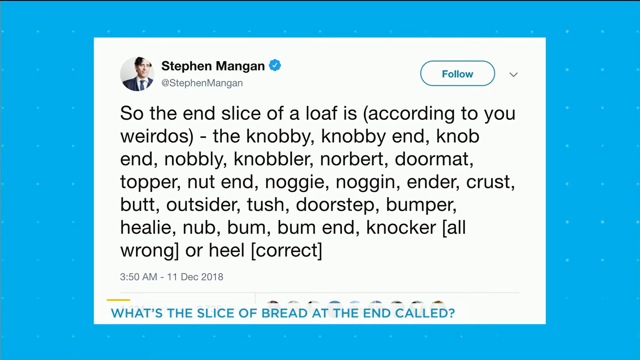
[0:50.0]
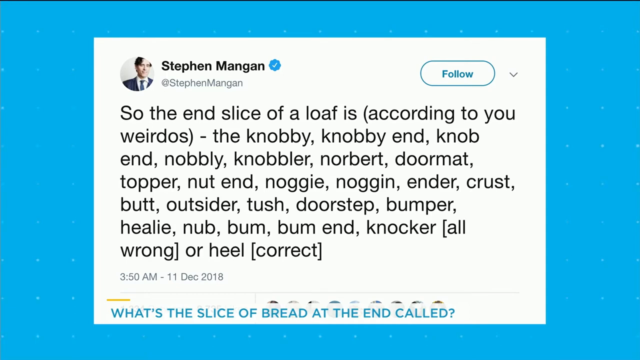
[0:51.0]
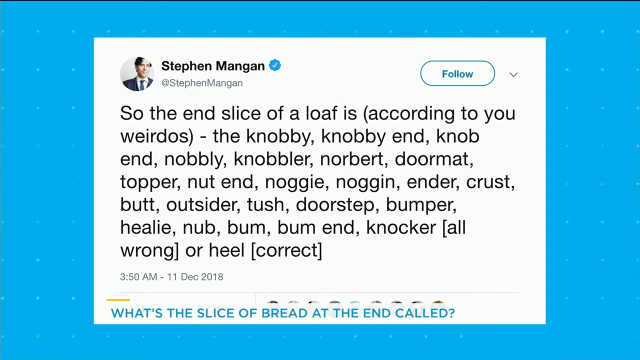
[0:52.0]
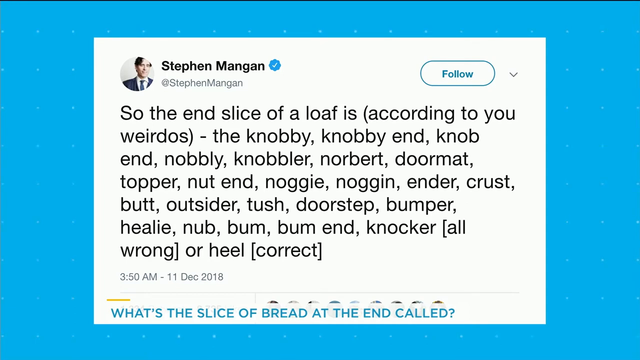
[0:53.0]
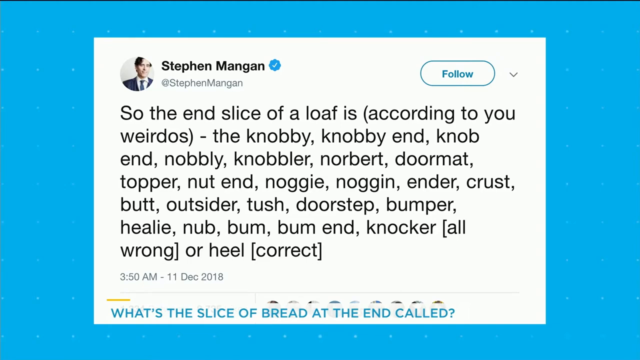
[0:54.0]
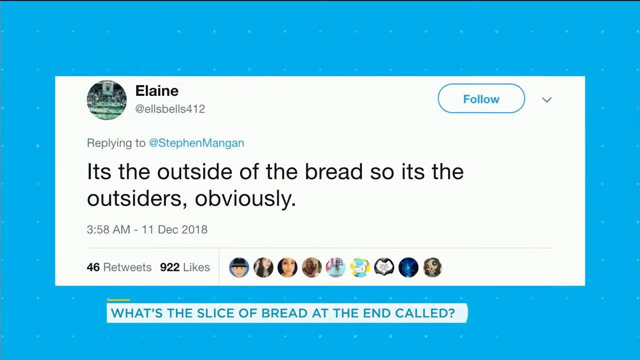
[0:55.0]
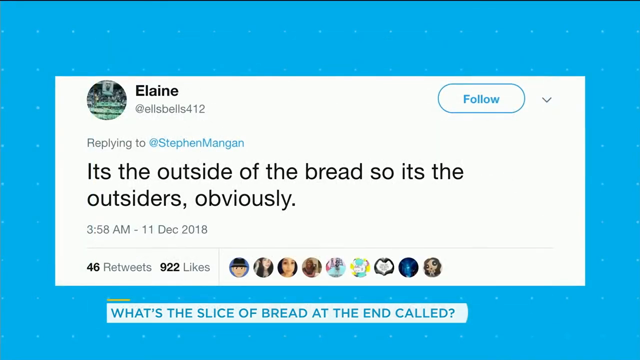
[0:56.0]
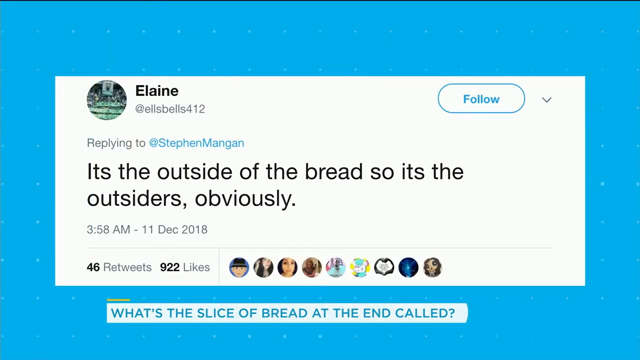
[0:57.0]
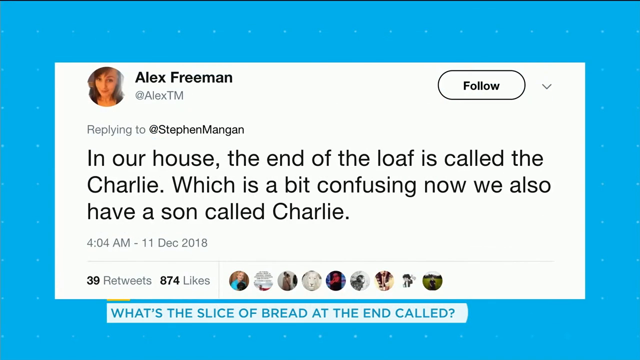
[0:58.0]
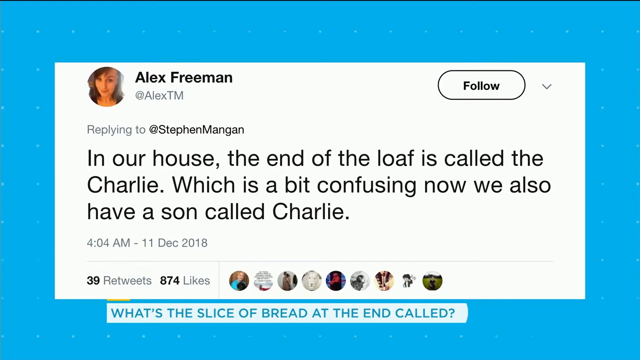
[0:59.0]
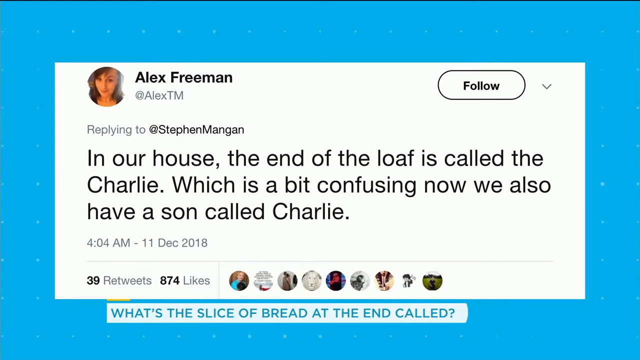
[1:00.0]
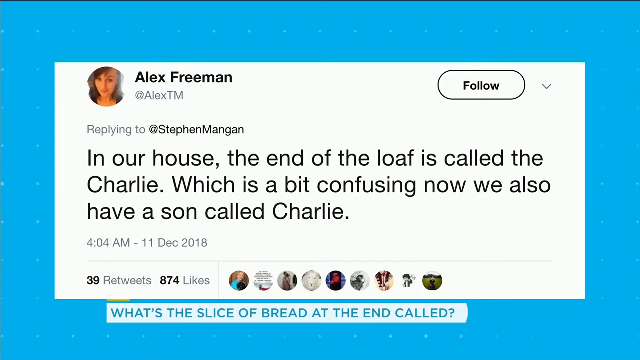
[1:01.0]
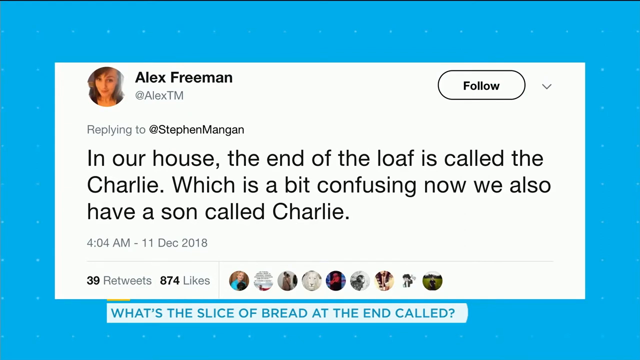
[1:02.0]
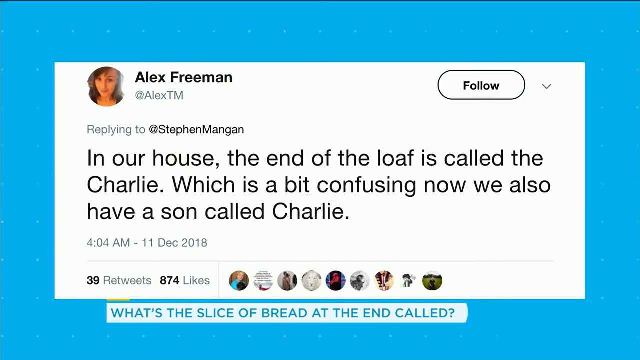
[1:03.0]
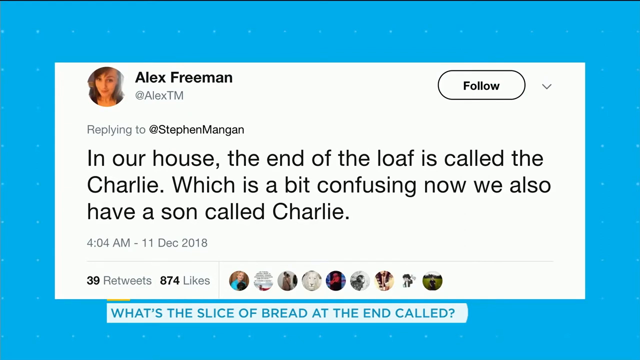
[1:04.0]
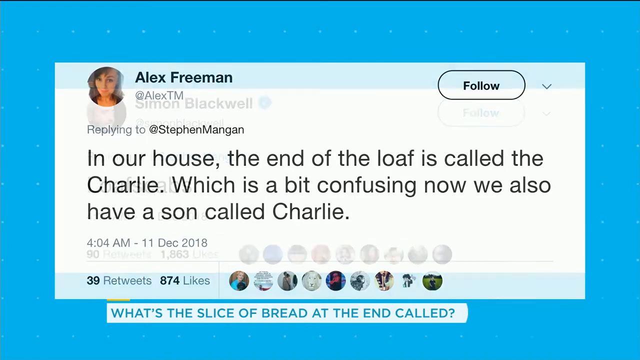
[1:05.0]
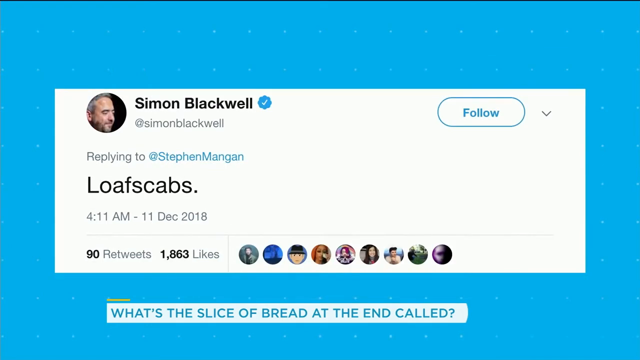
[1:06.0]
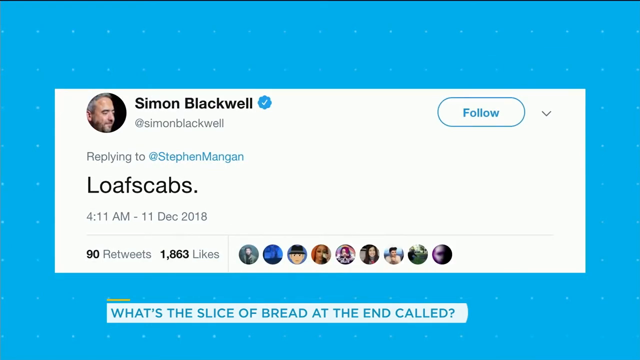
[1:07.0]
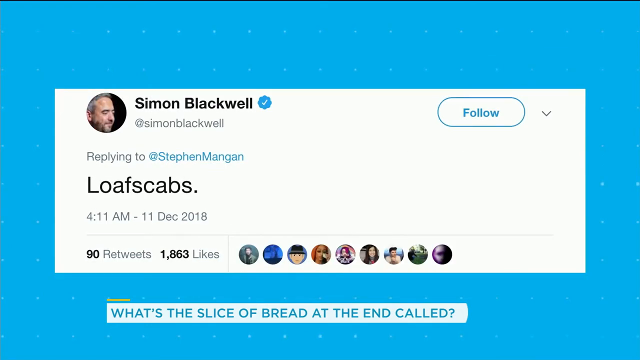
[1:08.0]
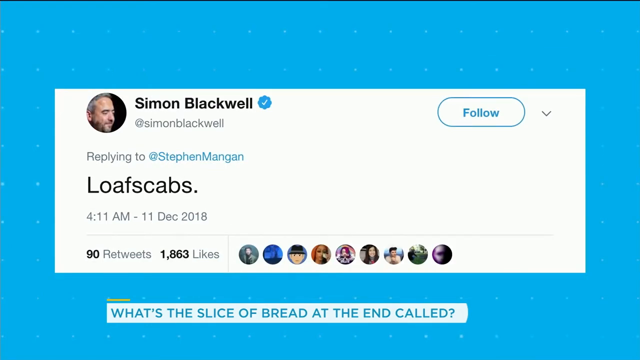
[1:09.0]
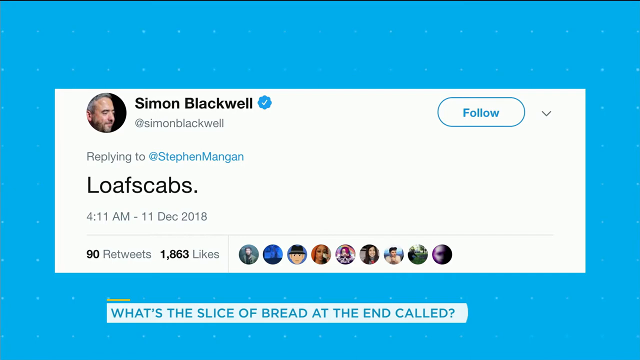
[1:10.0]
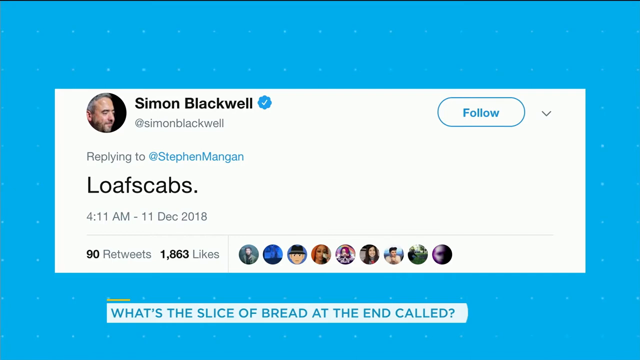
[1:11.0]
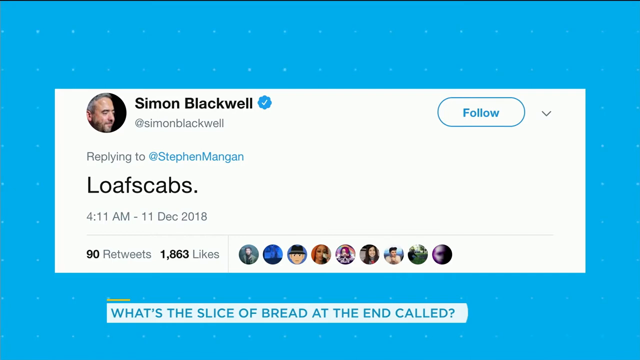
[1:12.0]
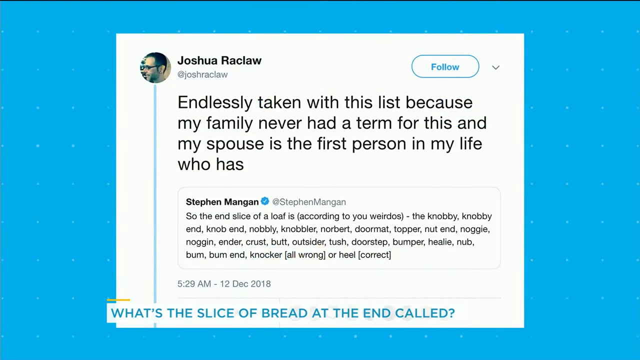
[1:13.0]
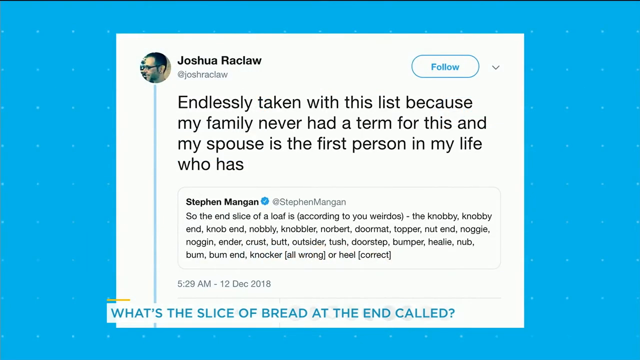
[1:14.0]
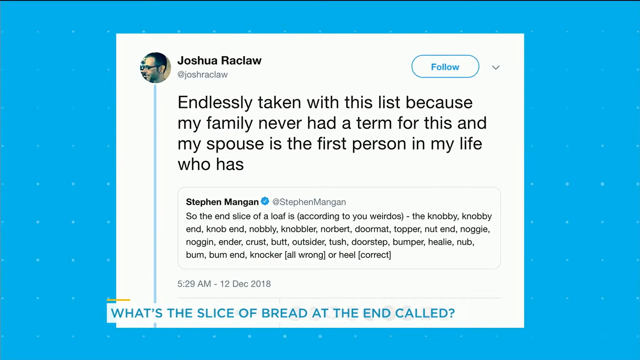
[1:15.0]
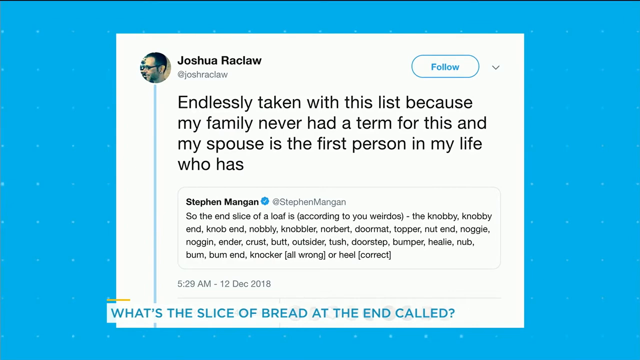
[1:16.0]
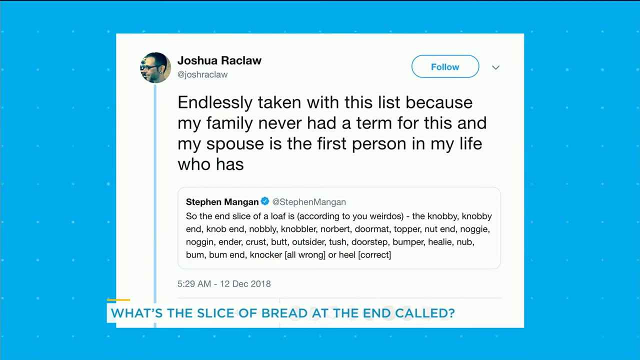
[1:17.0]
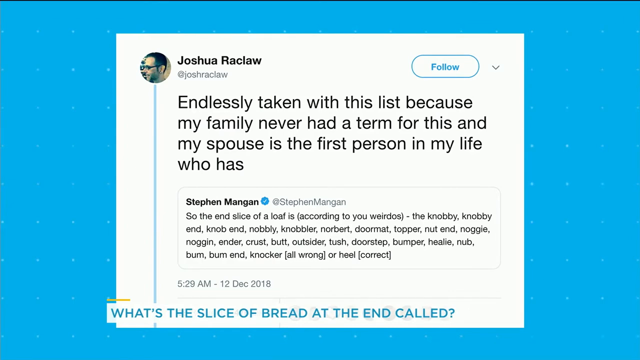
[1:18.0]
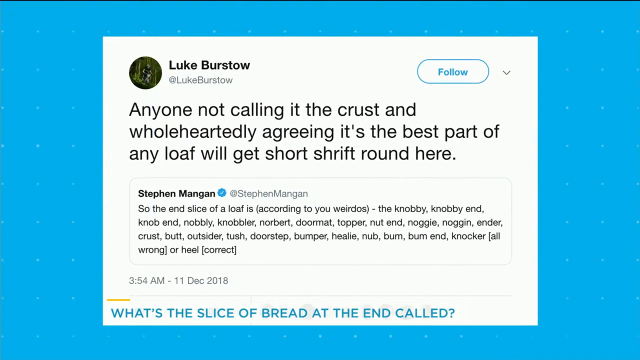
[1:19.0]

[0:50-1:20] A Twitter reply from a user named Lane appears. The profile image is hard to make out but almost looks like people standing on a green surface with what looks like a white banner from the Raptors hanging between them. A handle beginning "@Els bells" appears in gray at the far right. The Follow button indicates the account is not being followed. The post says it's the outside of the bread, and the timestamp, date, and the number of likes and retweets are shown. The next post is by Alex Freeman, a woman, with the handle "@Alex T"; it mentions the end being called Charlie and a son named Charlie. It is from 4:04 a.m. on December 11, 2018, with 39 retweets and 74 likes. Another post, apparently saying "loaf scab", is by Simon Blackwell, who is verified with a blue checkmark. A post from Joshua says his family never had a term for this. The view zooms in a little. None of these accounts appear to be followed, and beneath Joshua's comment, Stephen's original post is shown in smaller text.